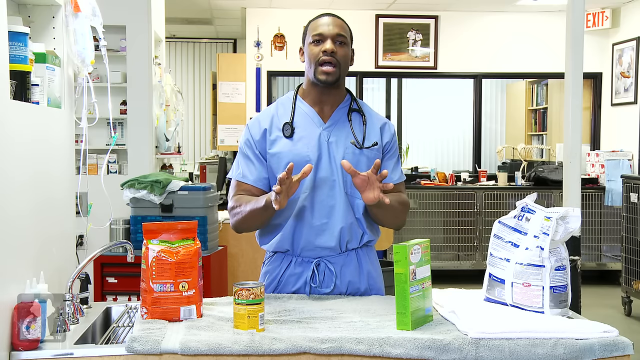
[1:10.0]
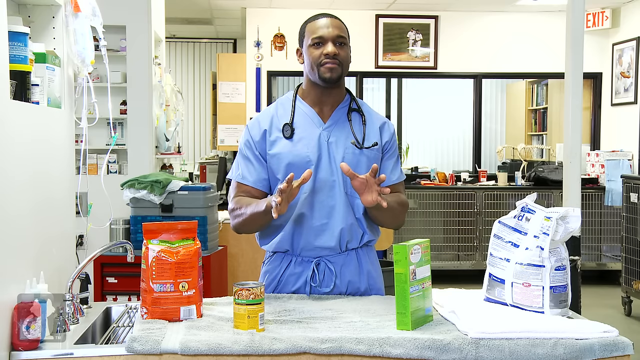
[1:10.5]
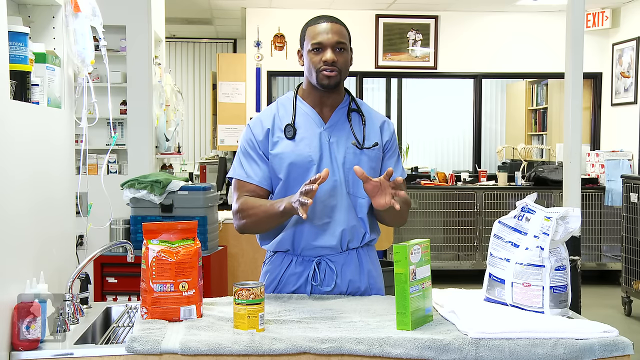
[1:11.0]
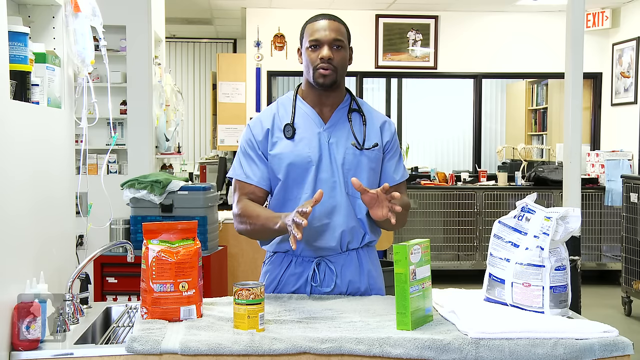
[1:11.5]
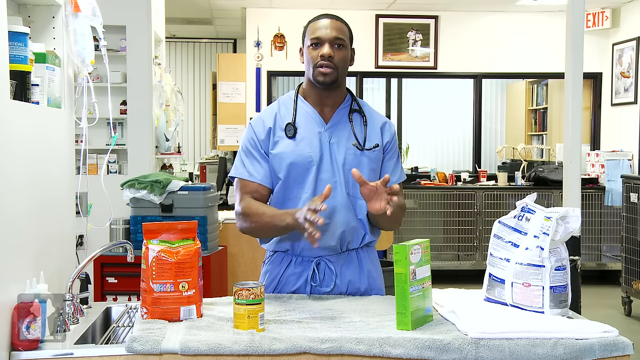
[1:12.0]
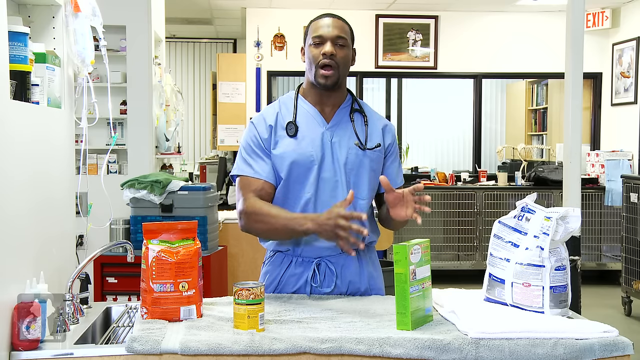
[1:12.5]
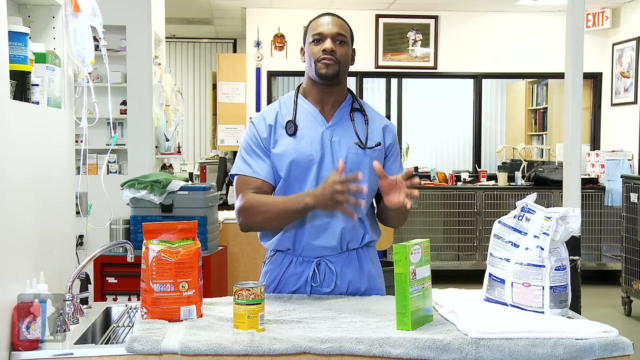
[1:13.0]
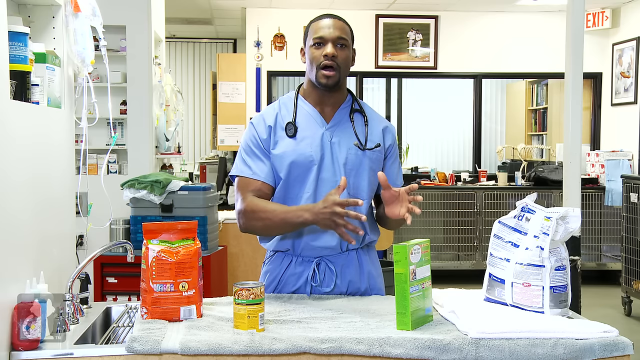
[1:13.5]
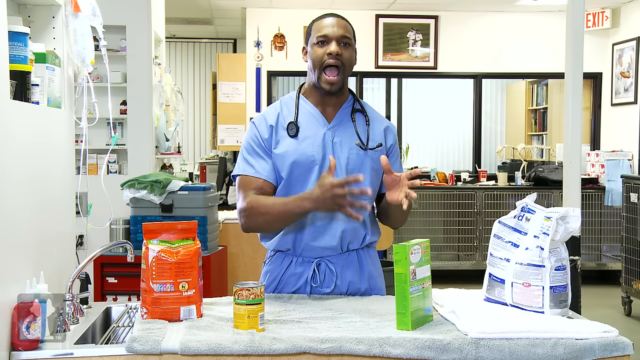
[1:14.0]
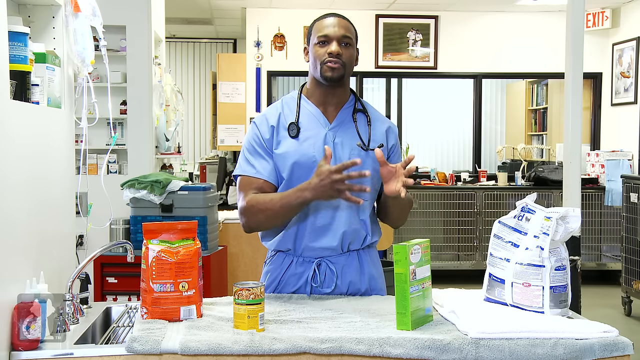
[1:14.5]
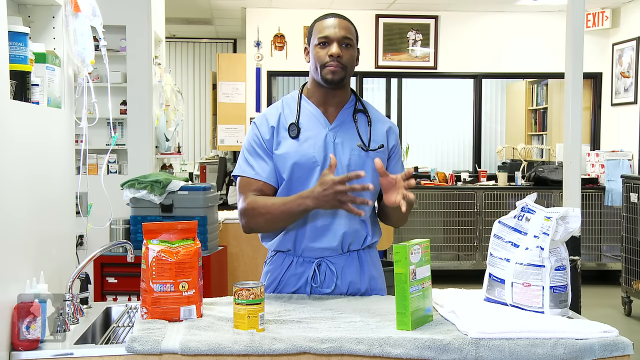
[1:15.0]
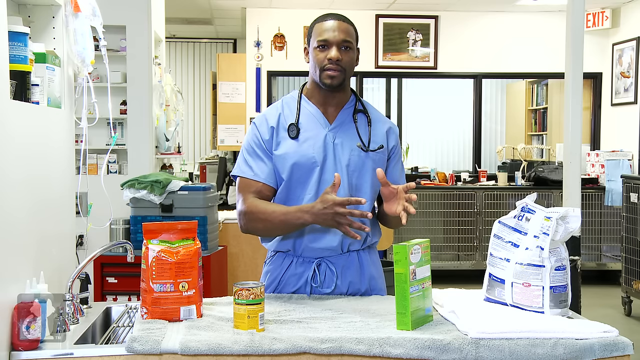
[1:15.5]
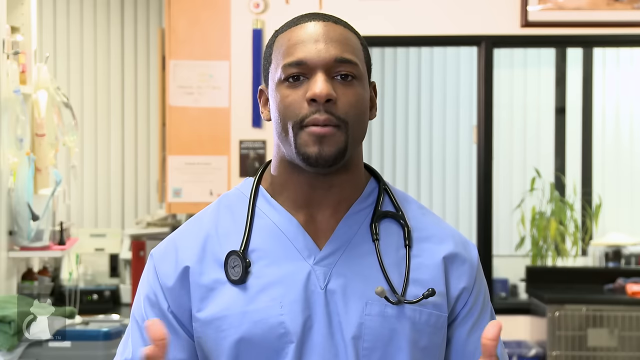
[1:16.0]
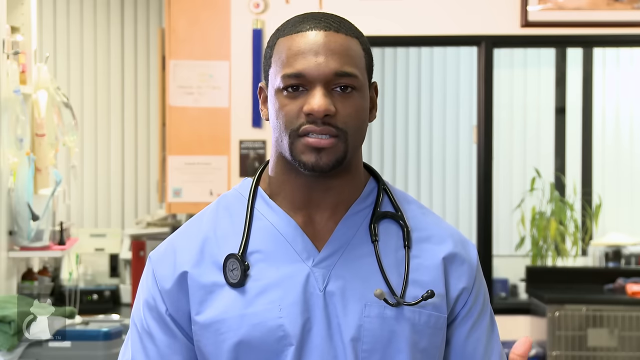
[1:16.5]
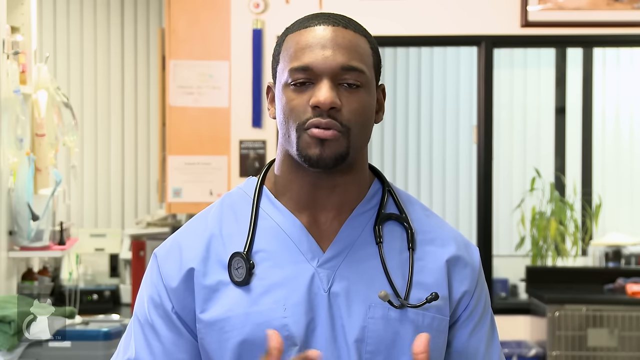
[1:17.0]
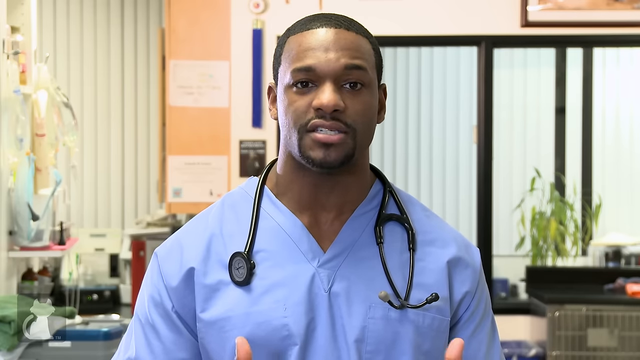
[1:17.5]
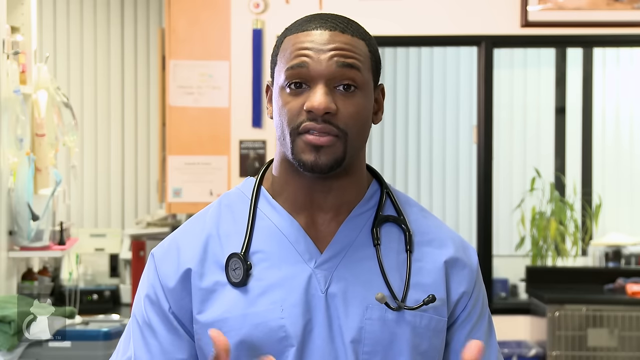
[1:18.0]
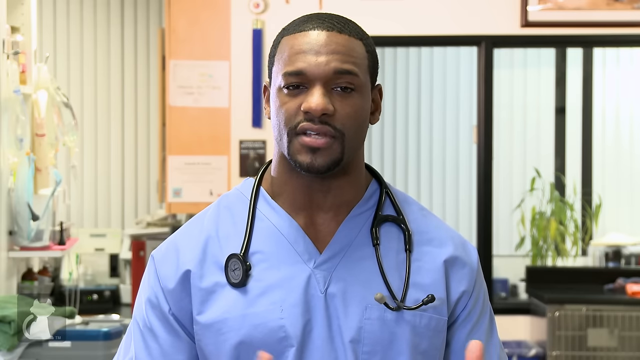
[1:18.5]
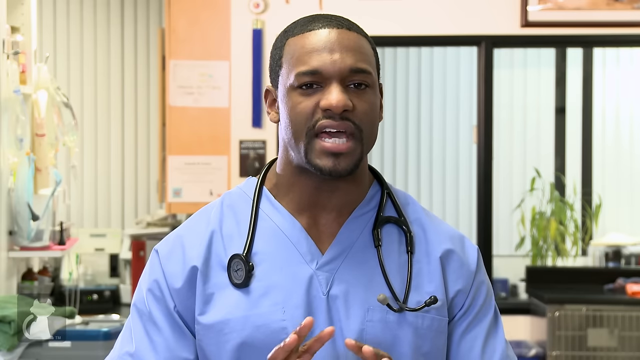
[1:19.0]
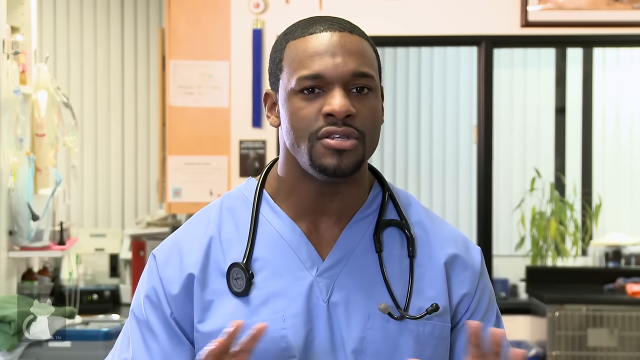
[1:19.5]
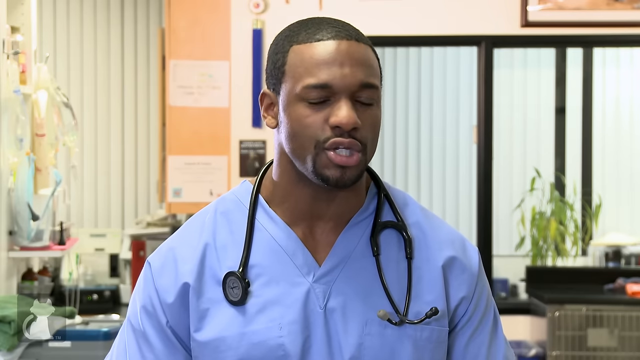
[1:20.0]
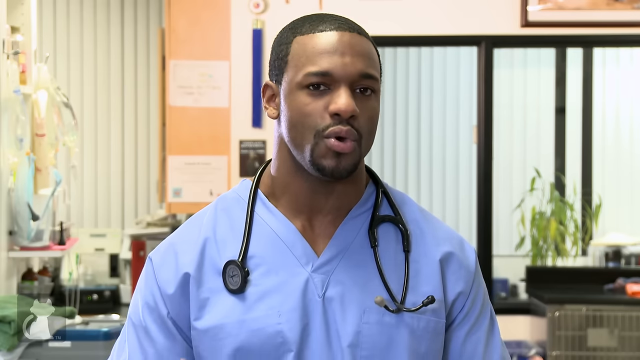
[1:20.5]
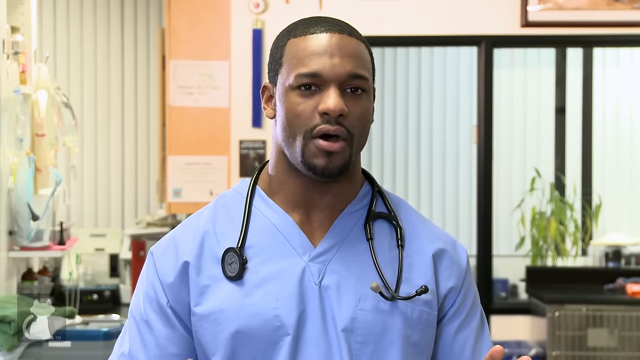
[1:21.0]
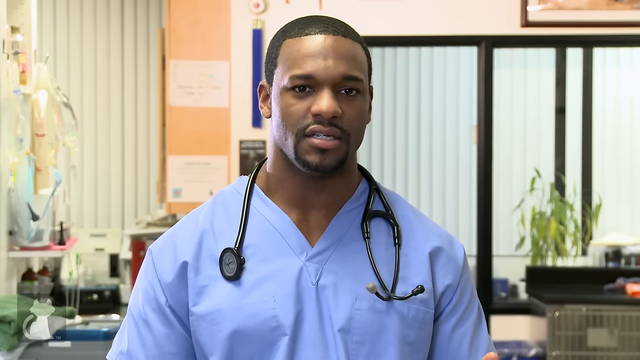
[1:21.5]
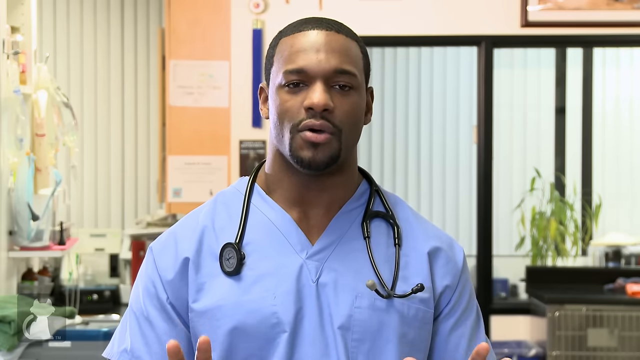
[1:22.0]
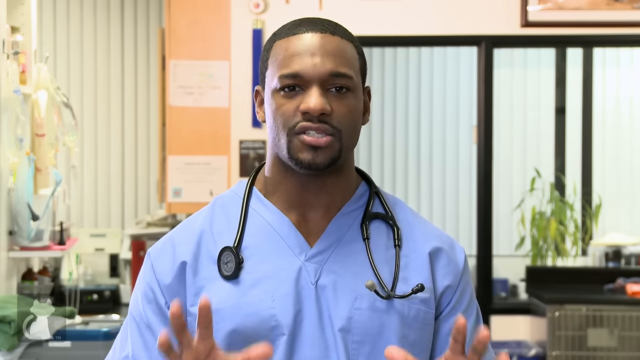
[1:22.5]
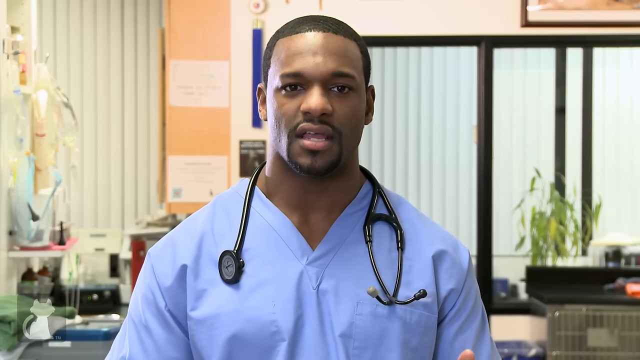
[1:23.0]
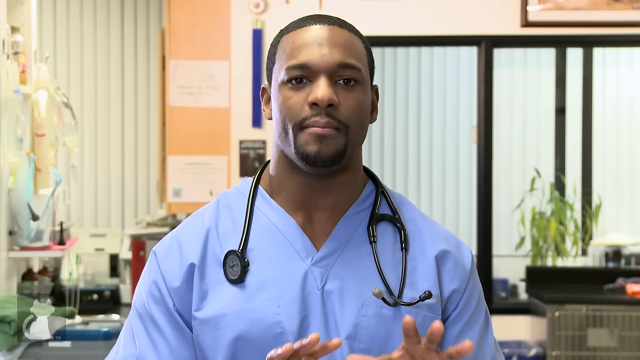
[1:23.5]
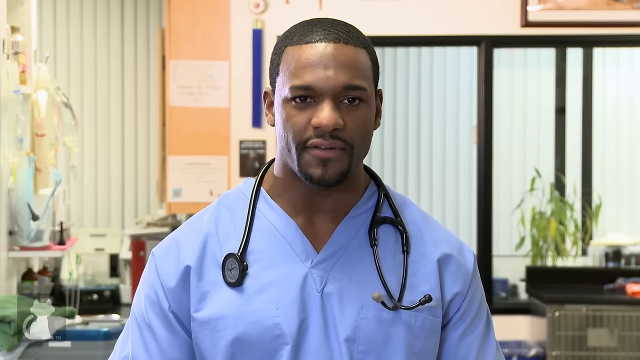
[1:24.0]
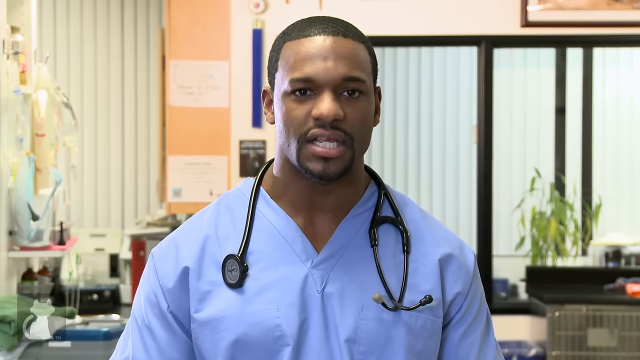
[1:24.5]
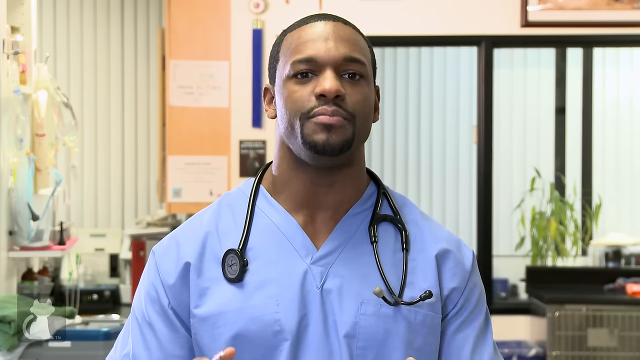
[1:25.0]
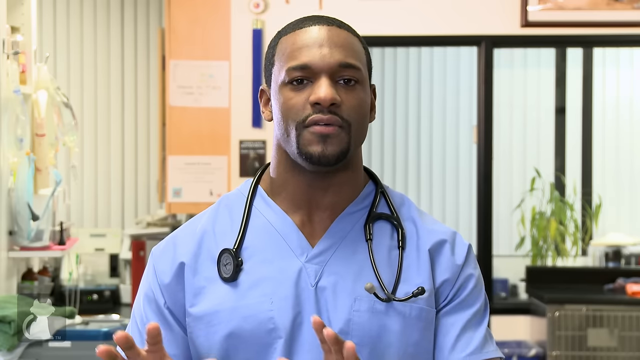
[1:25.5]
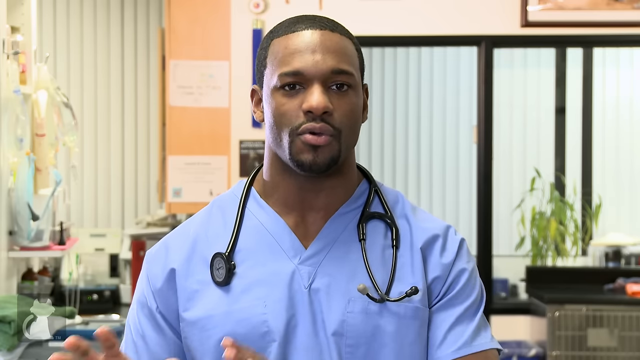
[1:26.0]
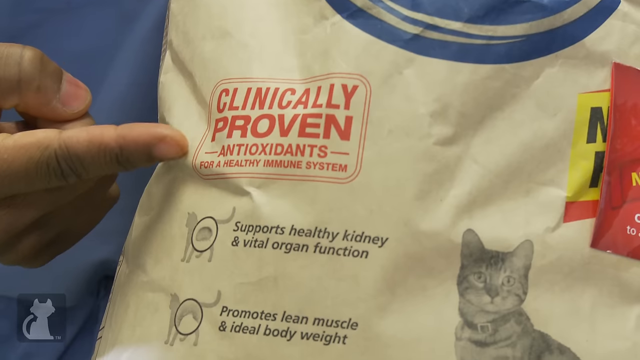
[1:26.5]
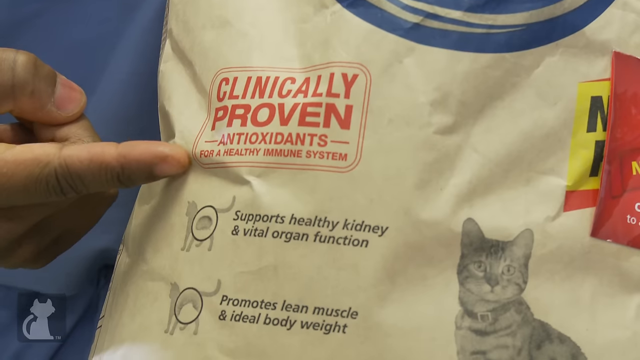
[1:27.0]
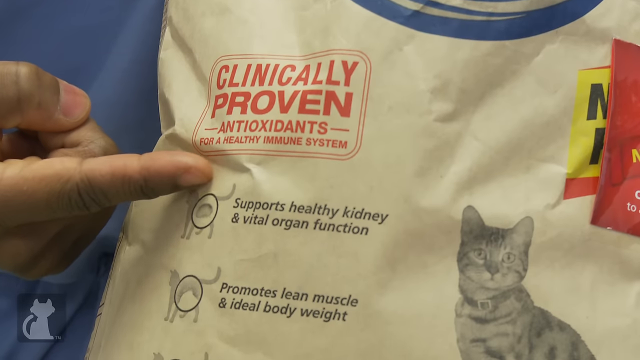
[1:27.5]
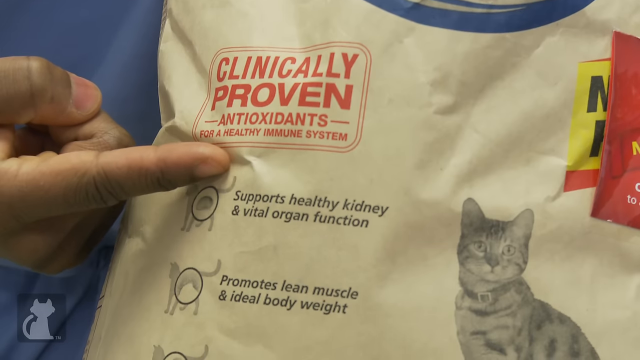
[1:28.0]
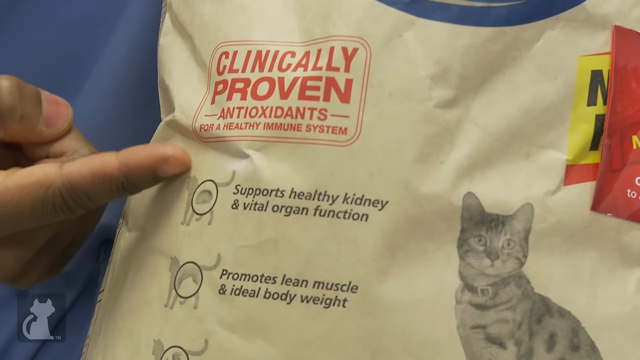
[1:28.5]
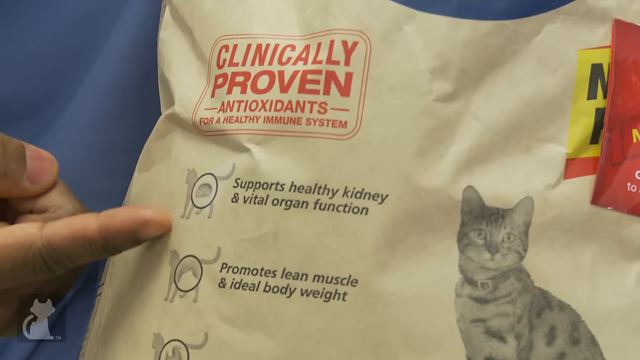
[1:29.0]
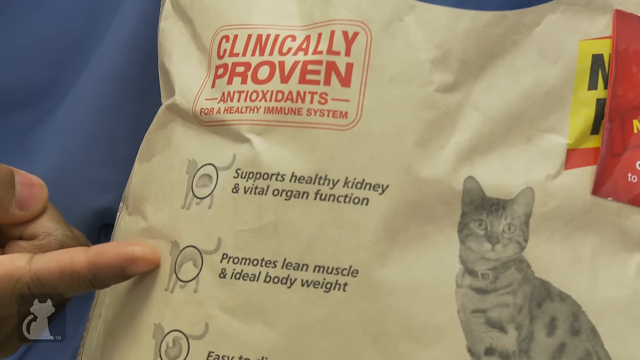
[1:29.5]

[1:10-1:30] A man wears blue scrubs with his stethoscope draped across the back of his neck. He is a Black man, framed from the head to the hips, standing behind a table on which four items are displayed. From left to right: a red packaging bag, a small can that looks like dog food, a green box package, and a large flexi package that is white with blue designs. Behind and all around him is his office, which has white walls, with a window and drapes behind him. He speaks, gesturing with his hands; he looks quite muscular and handsome, with short, trim cropped hair. Next comes a closer view of his head and chest as he speaks. He looks serious, as if emphasizing his point, slightly furrowing his forehead and then relaxing it, gesturing gently with his hands and nodding as he speaks. Then a closer view shows cat food packaging. Written on it in red is "clinically proven antioxidants," and further health benefits read "support healthy kidney and vital organ function" and "promotes lean muscle and ideal body weight." The man's fingers trace down the benefits one by one.